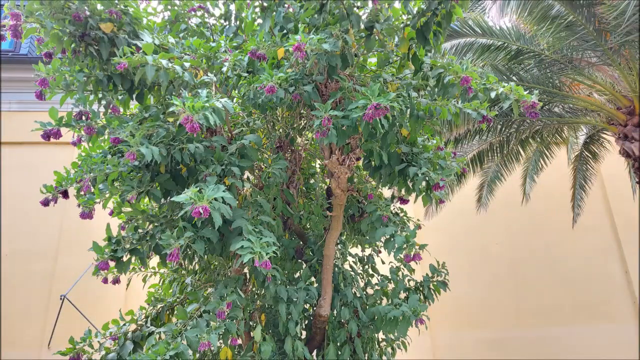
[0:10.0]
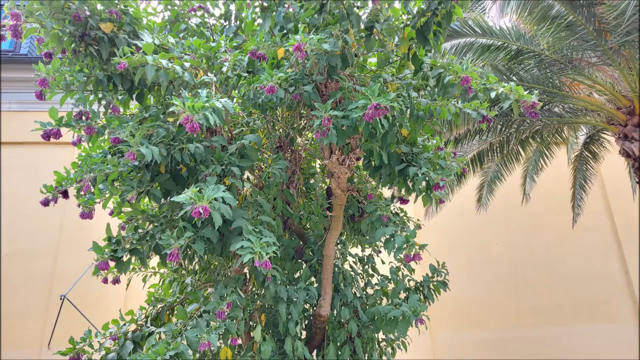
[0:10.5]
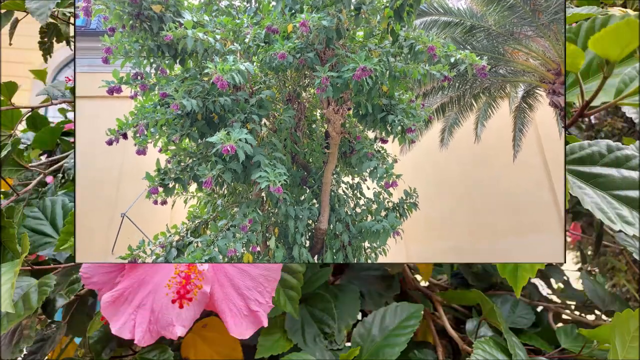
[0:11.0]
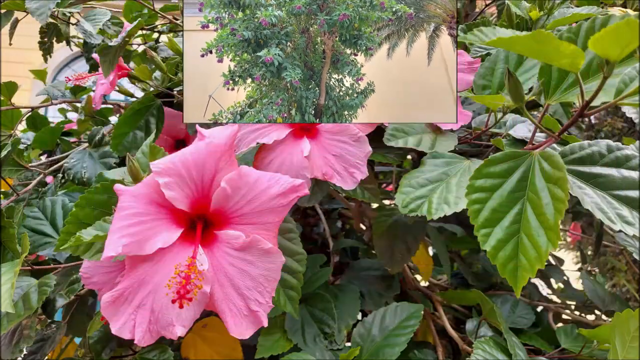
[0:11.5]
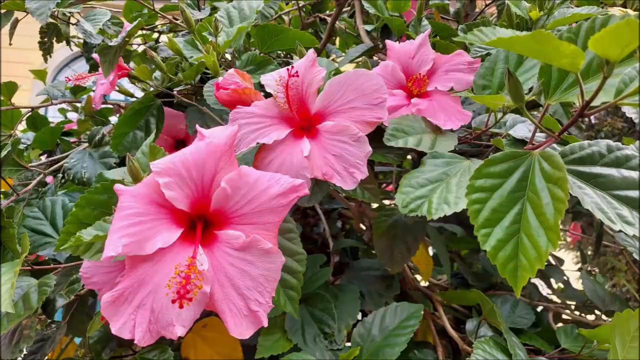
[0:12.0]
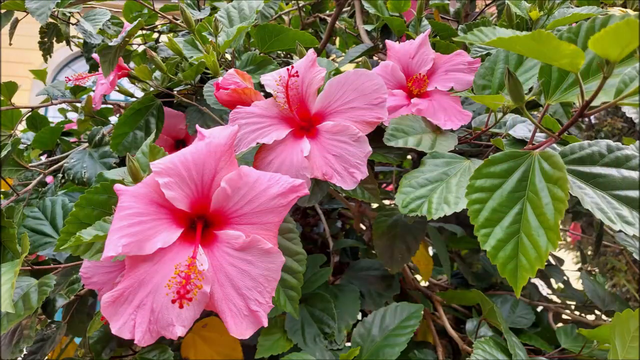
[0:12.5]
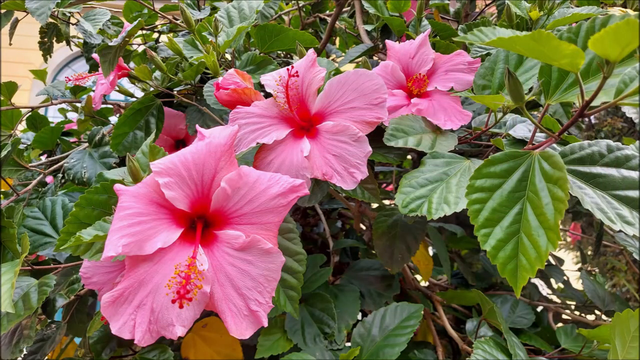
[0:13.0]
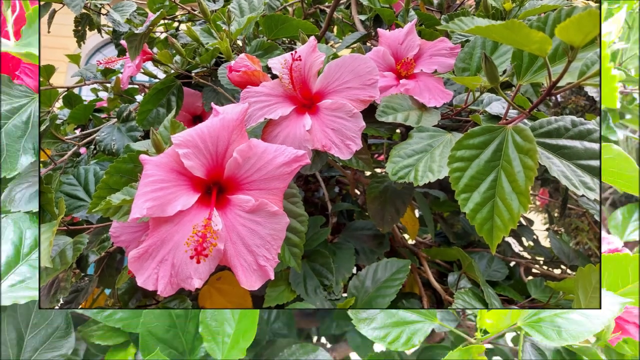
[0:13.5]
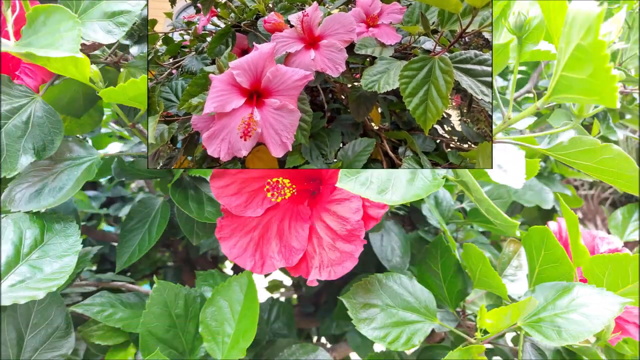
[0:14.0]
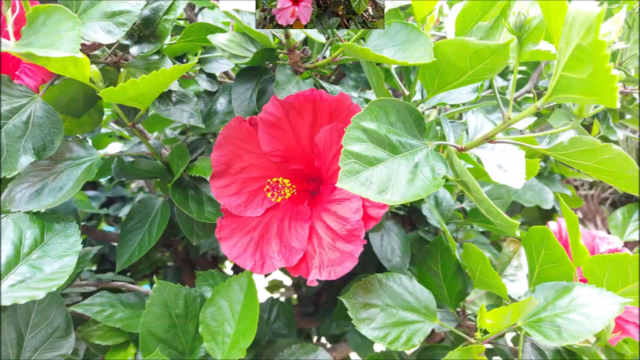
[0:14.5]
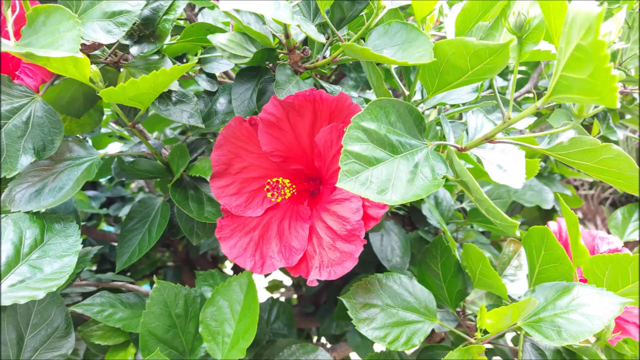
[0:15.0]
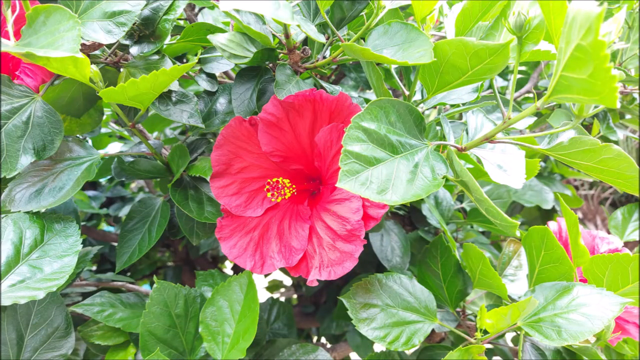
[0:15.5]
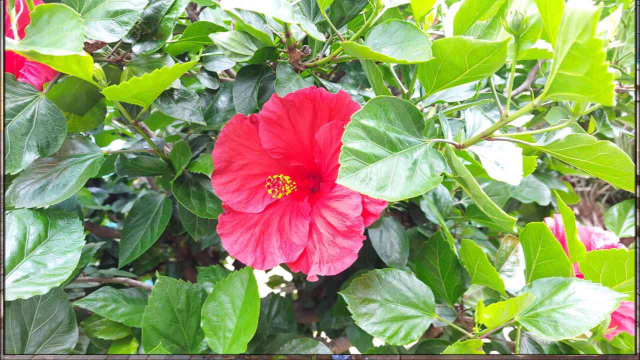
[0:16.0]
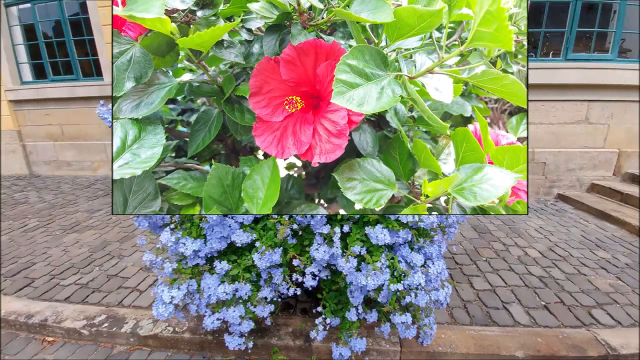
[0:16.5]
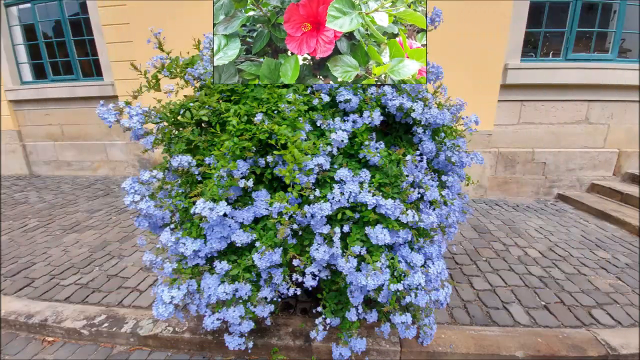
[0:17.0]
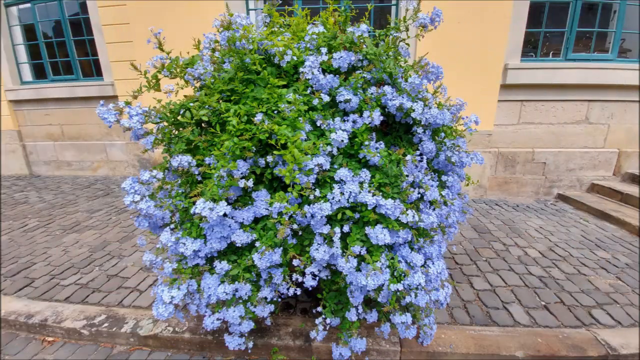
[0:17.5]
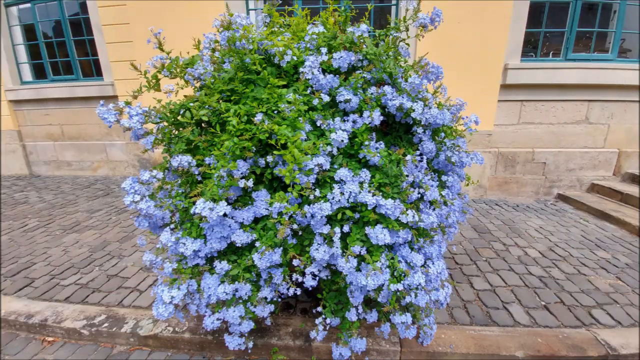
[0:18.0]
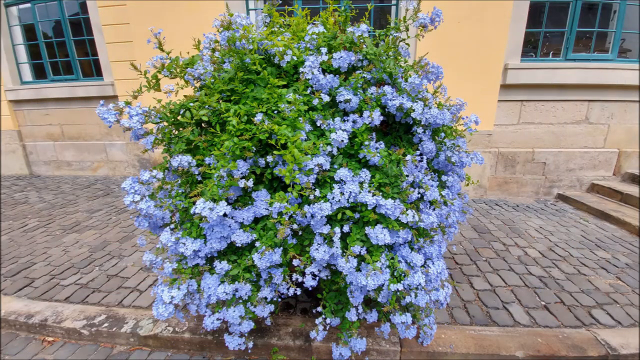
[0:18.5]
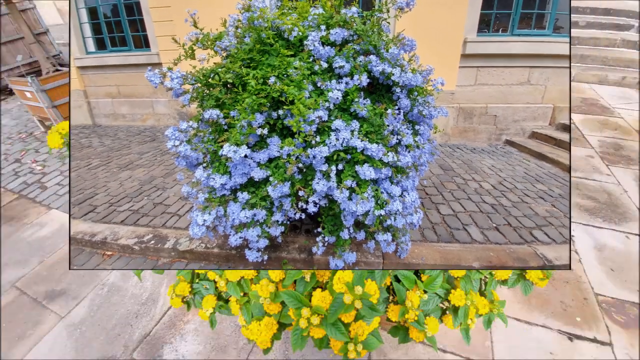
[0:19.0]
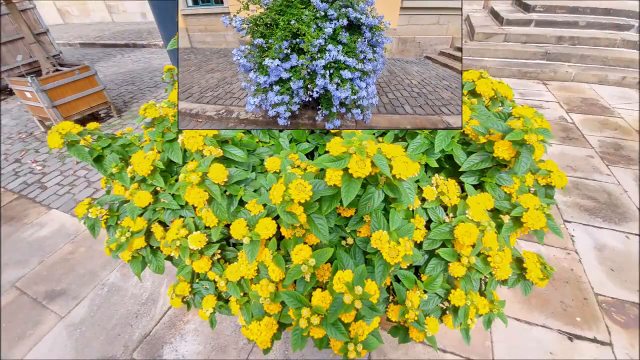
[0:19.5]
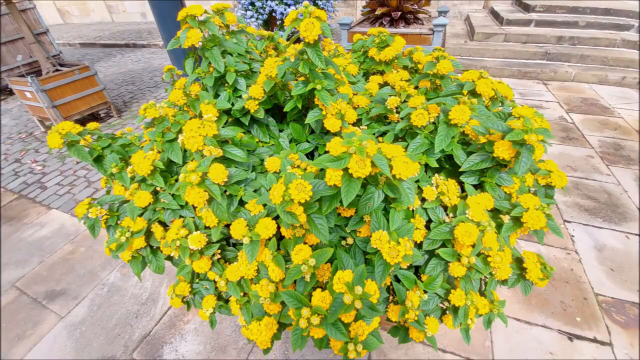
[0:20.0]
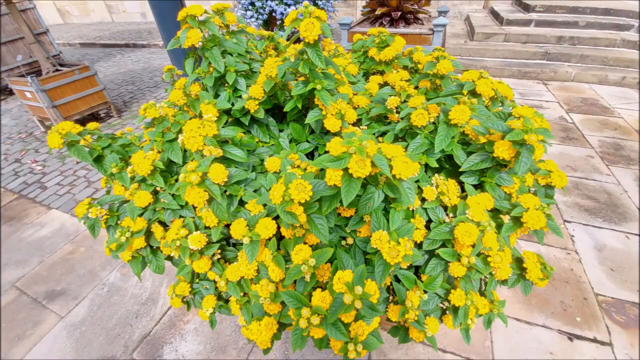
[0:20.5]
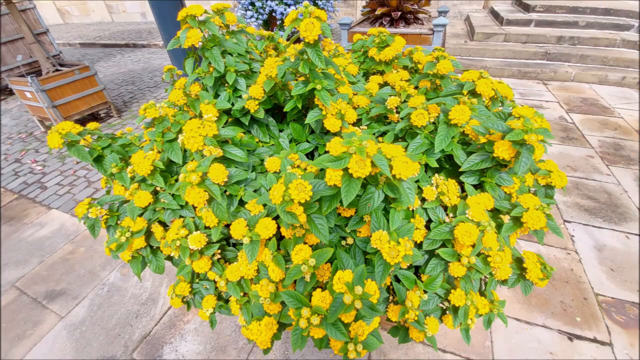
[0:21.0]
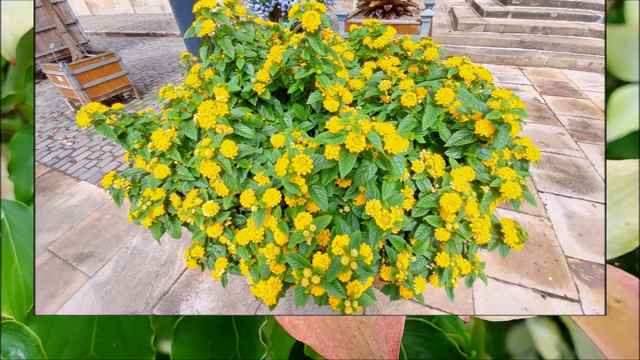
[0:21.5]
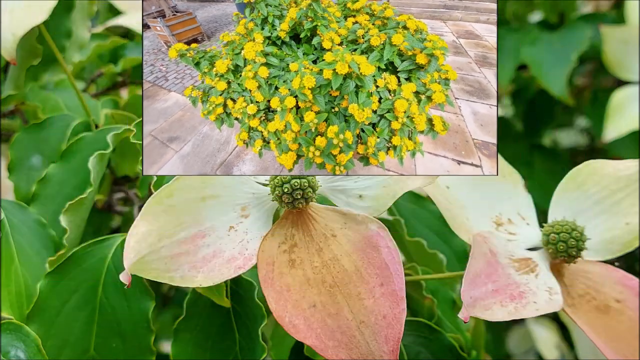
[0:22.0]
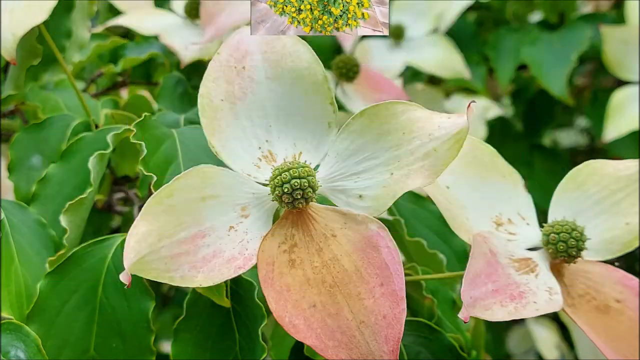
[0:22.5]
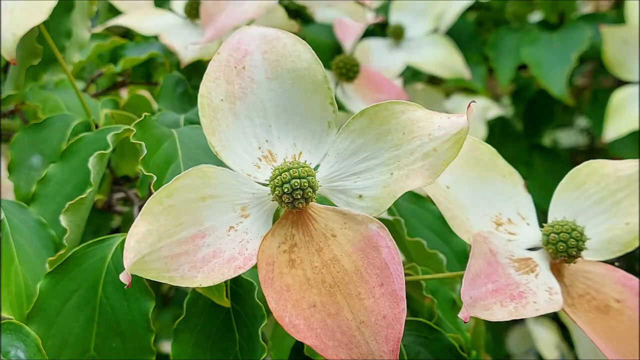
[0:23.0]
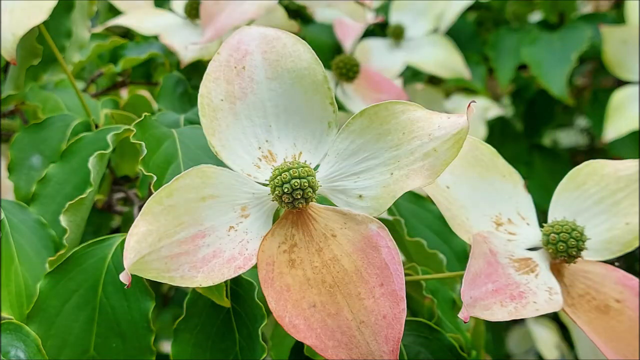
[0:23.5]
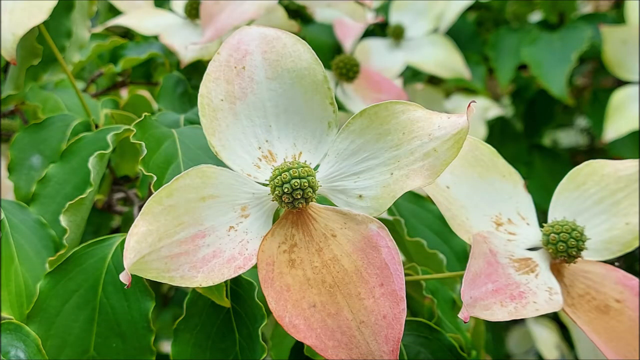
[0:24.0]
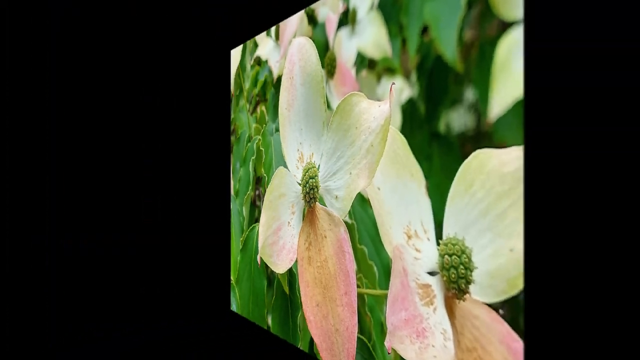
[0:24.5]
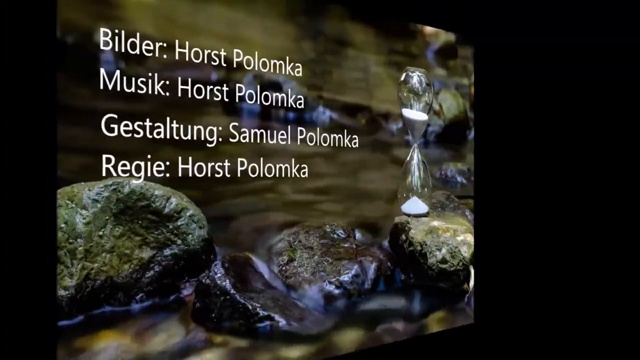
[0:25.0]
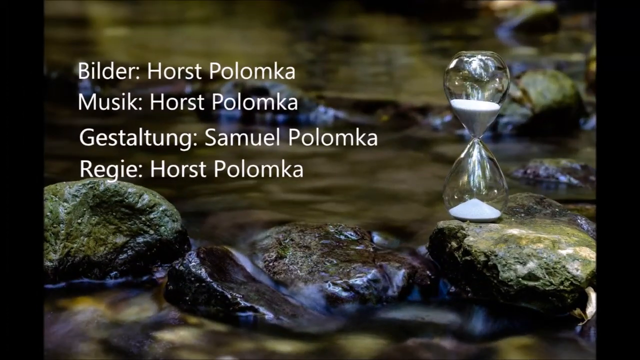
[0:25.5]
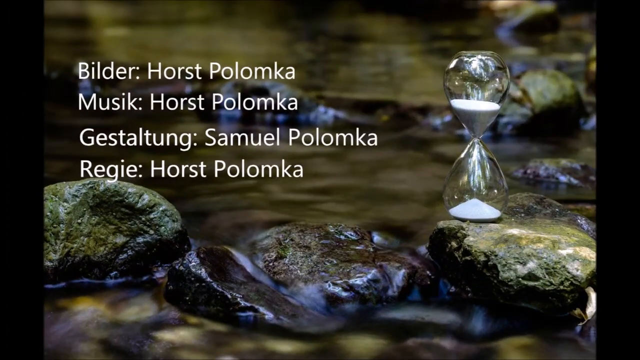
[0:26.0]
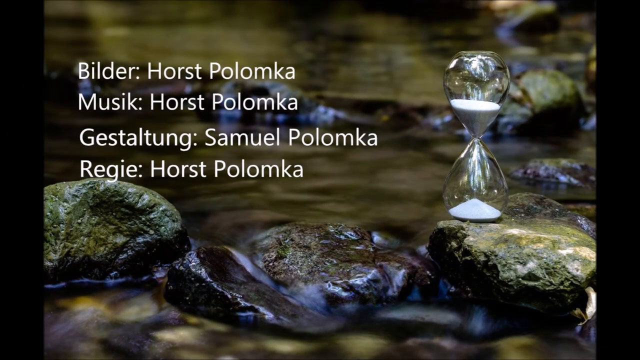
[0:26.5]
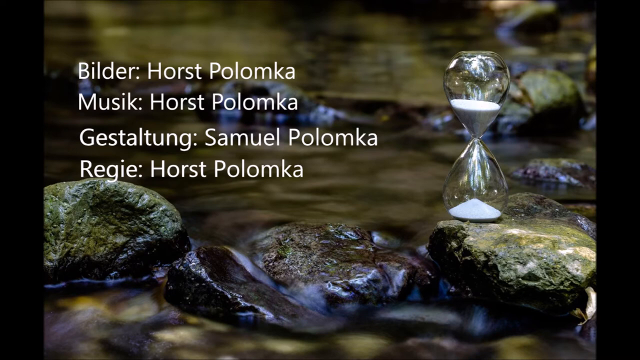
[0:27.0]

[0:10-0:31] A garden appears, with a close-up of a bush bearing red, pinkish flowers with yellow in the center. The view moves to another bush with light blue flowers, then to a bush with yellow flowers, then to a bush with an off-white, pinkish look. German writing appears at the end.